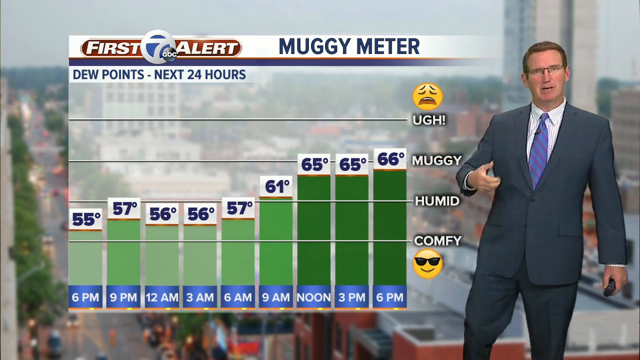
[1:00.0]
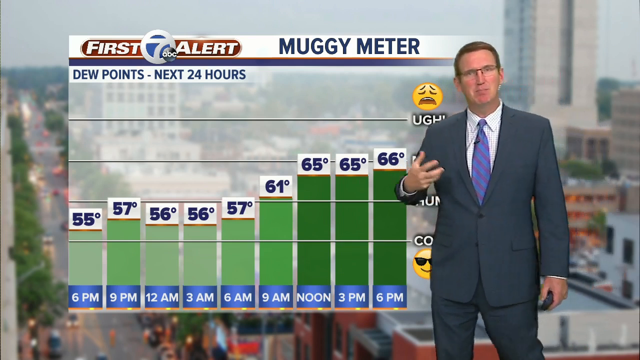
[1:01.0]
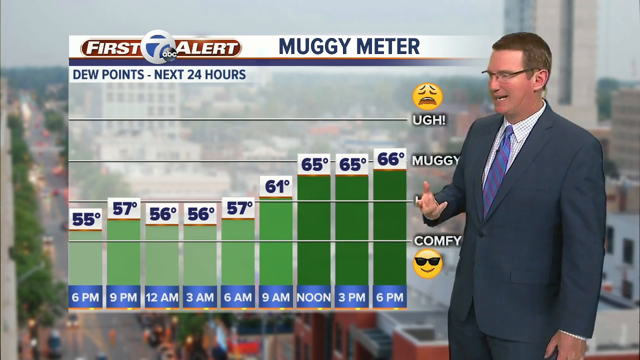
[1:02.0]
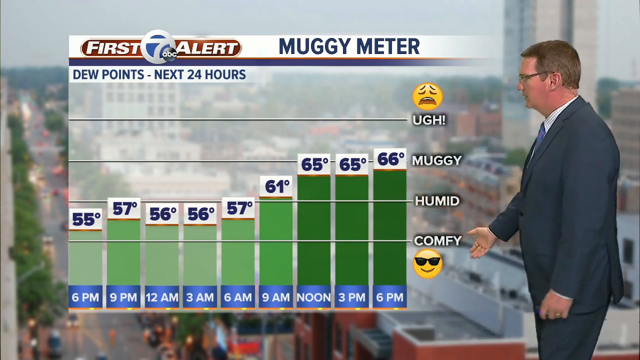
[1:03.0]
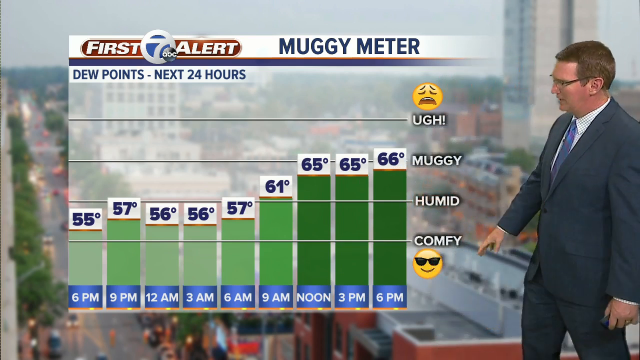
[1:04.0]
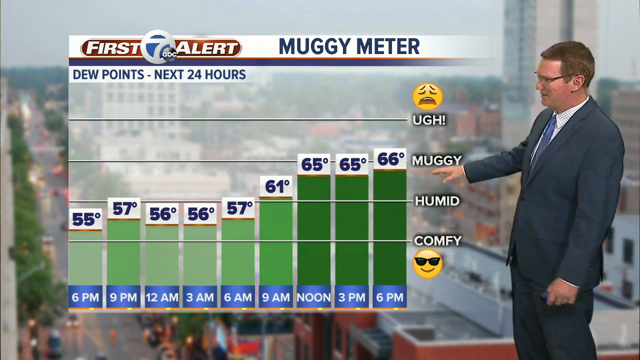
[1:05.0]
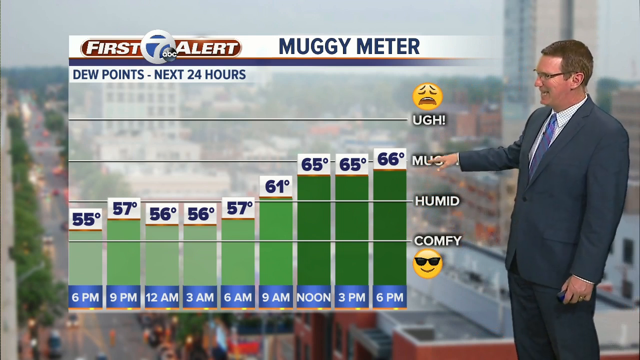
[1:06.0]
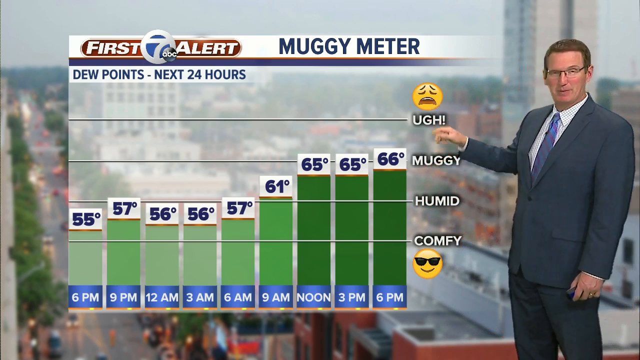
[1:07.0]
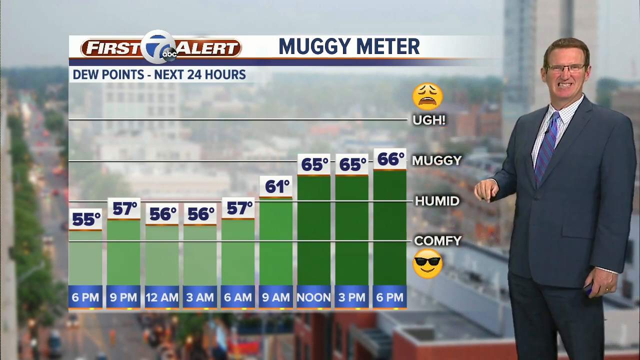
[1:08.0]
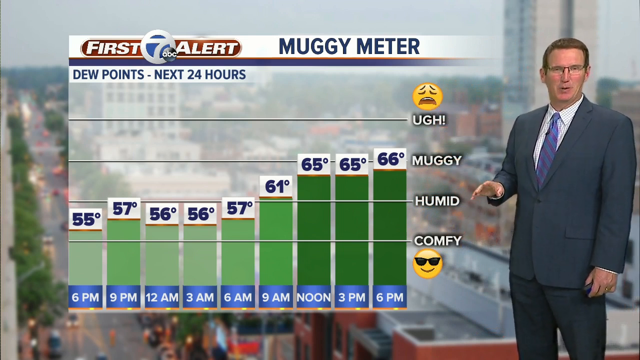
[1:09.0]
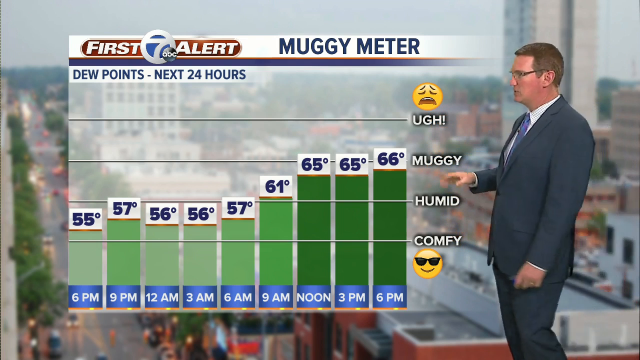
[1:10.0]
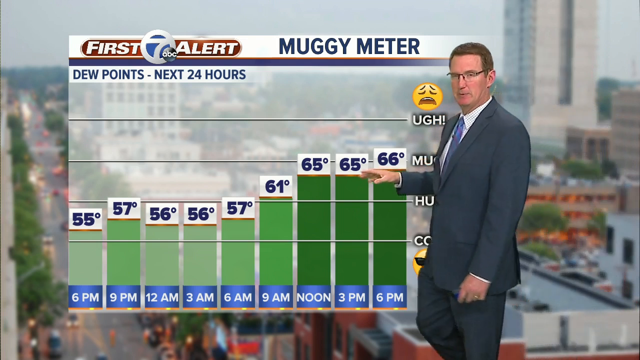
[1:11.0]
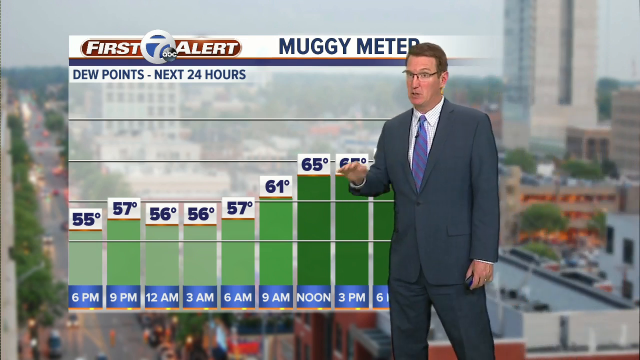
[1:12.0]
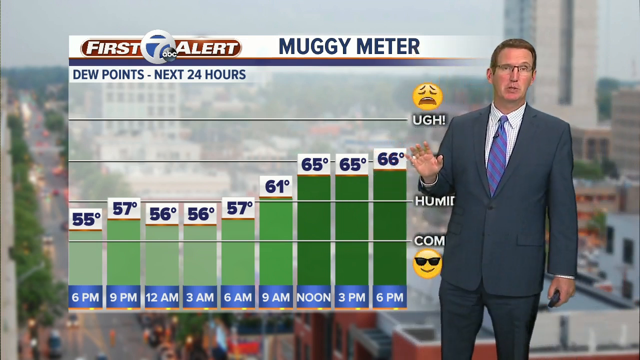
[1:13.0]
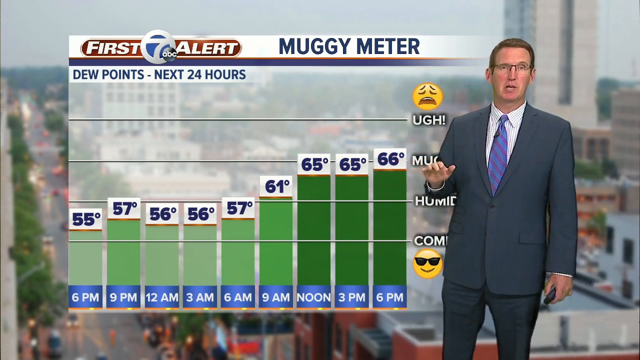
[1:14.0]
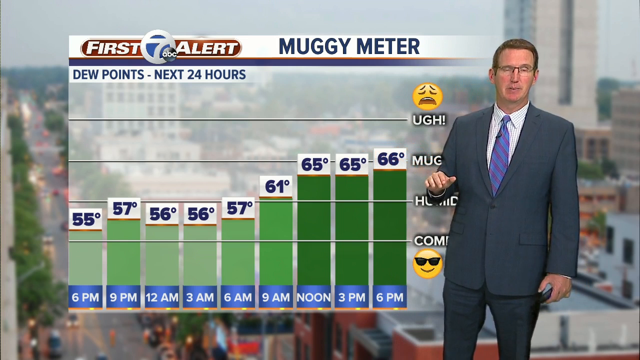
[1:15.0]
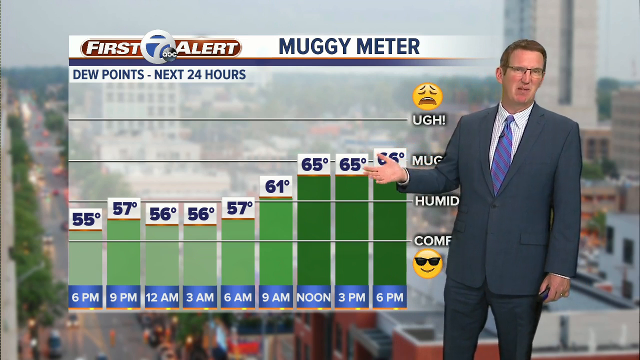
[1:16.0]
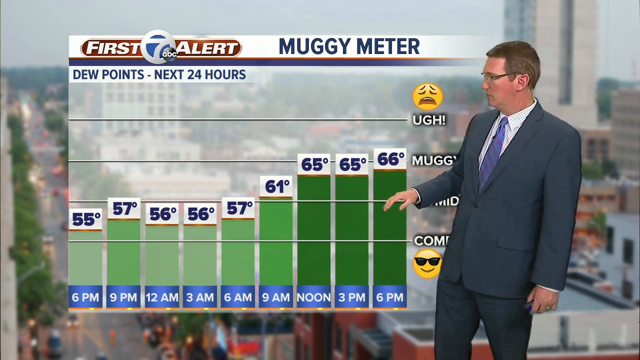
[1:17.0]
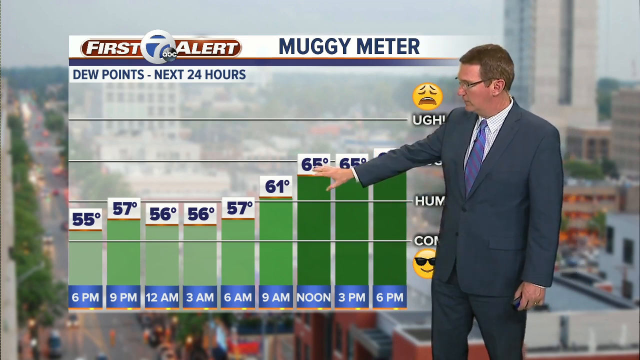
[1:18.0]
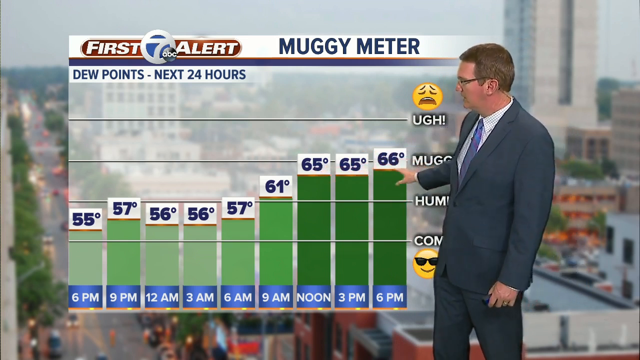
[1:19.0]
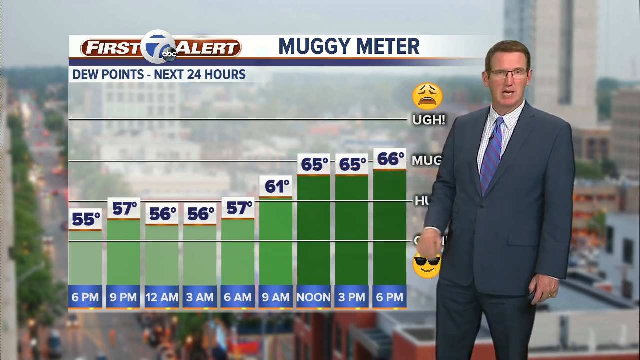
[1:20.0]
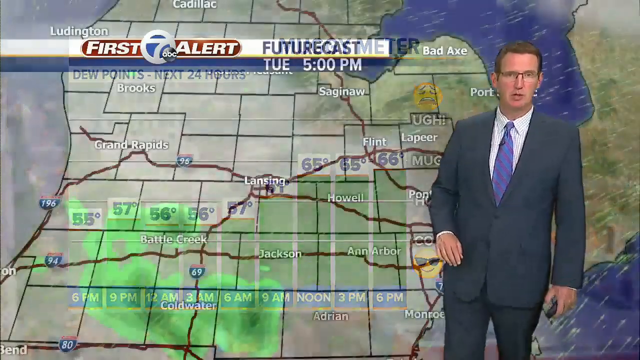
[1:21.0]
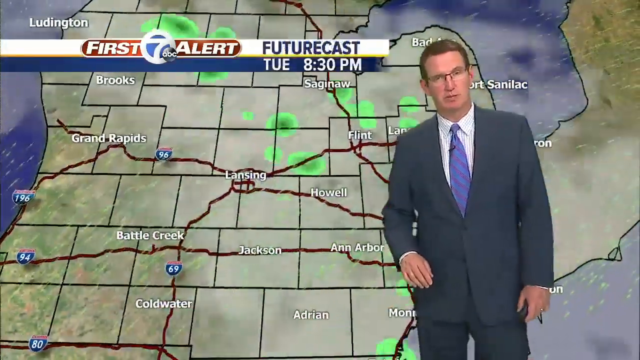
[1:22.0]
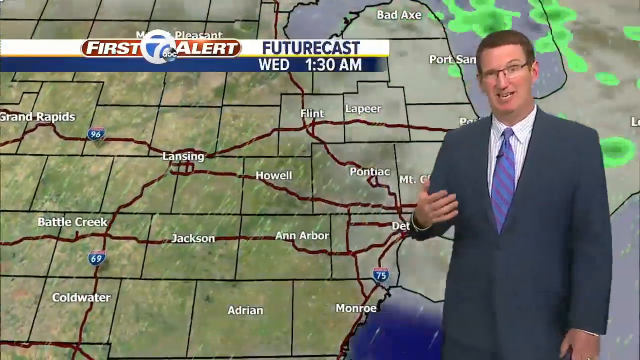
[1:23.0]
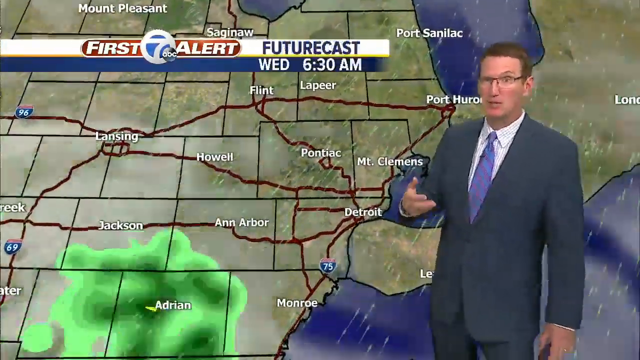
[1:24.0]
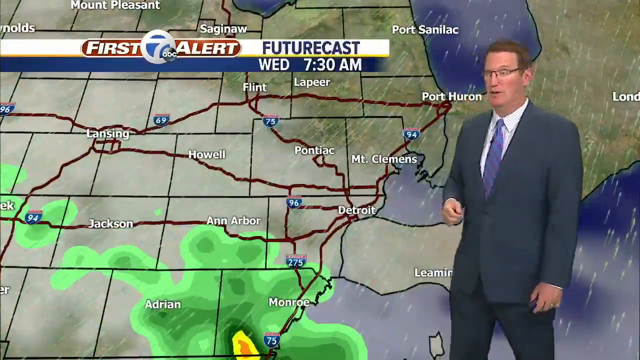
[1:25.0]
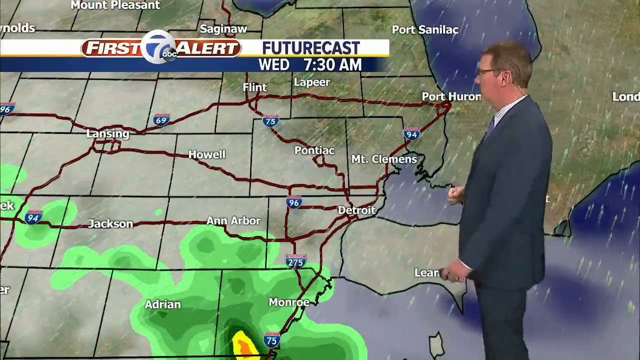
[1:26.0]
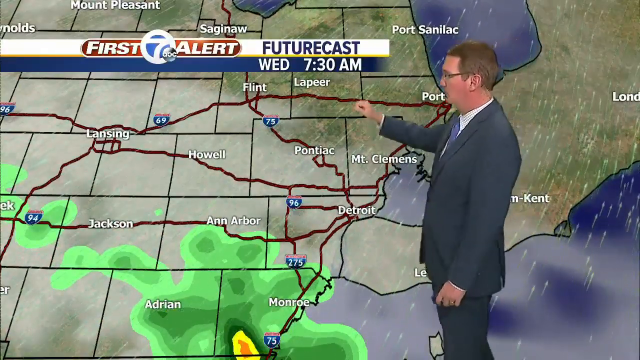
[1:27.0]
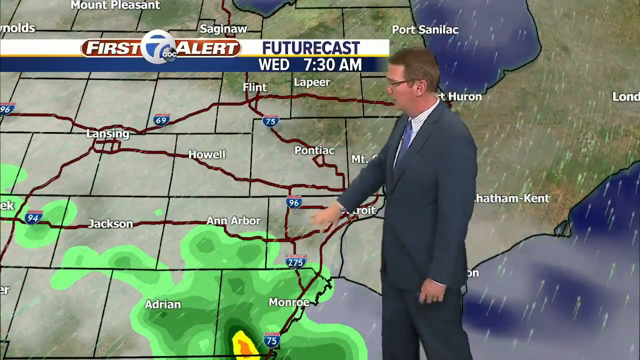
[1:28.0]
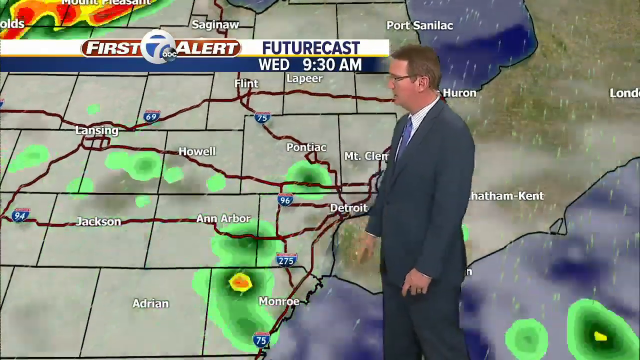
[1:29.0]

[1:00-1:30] The meter is shown as dew point for the next 24 hours: the lowest level is comfy, the middle is humid, just above the middle is muggy, and the highest level is ach, shown with a crying, disappointed emoji. Rain is shown moving in on Wednesday at 7:30 a.m., with different weather signage as he demonstrates Wednesday morning. It seems as if rain is about to cover the towns, with wet conditions along the sea point and hot conditions moving to the sea points.